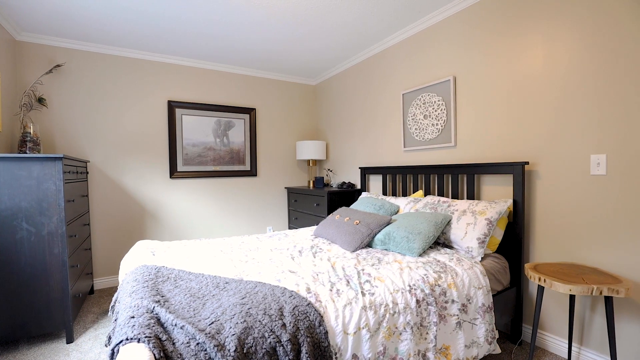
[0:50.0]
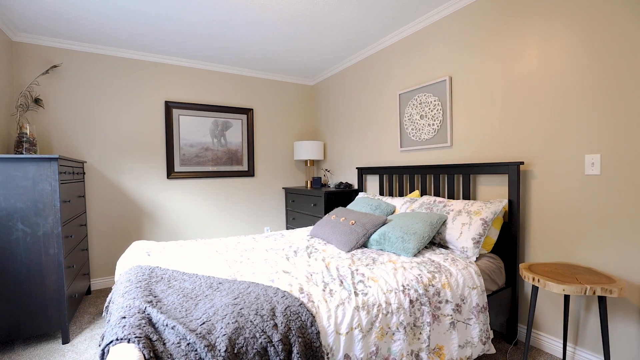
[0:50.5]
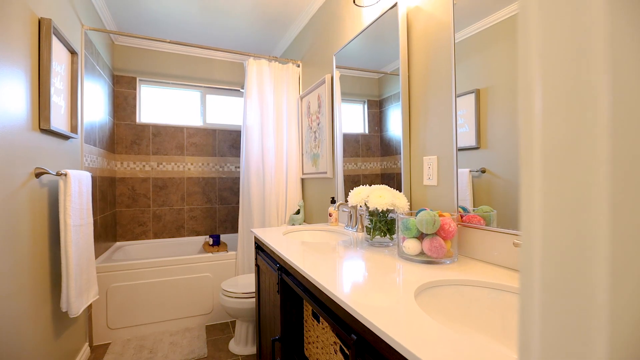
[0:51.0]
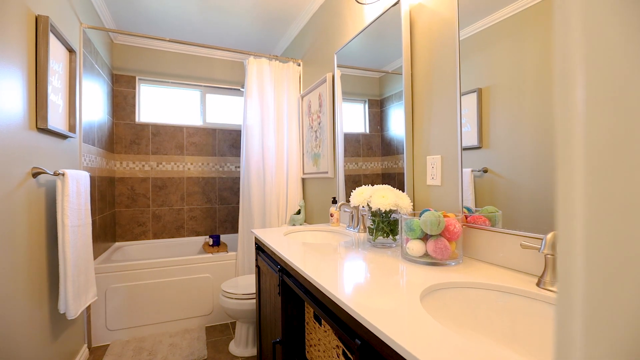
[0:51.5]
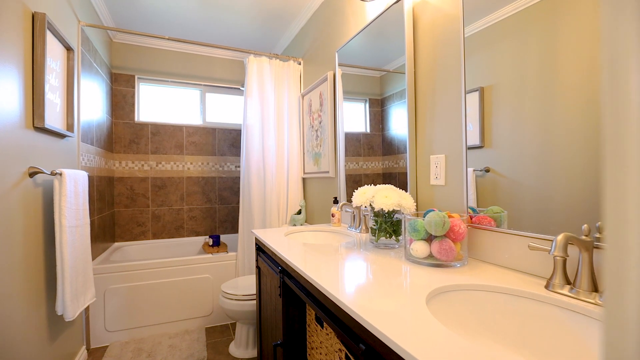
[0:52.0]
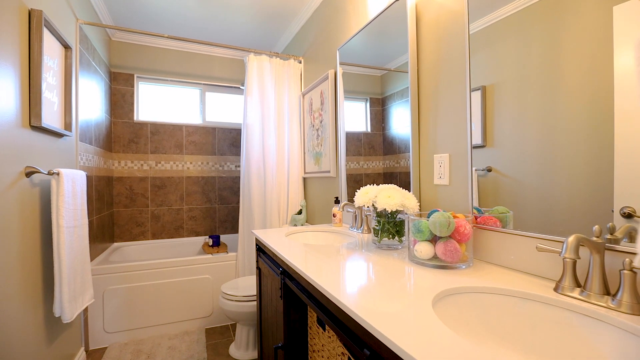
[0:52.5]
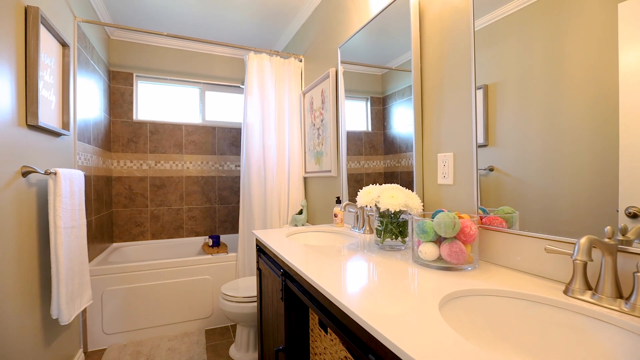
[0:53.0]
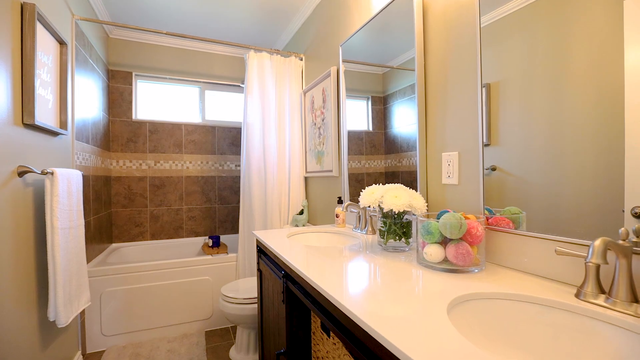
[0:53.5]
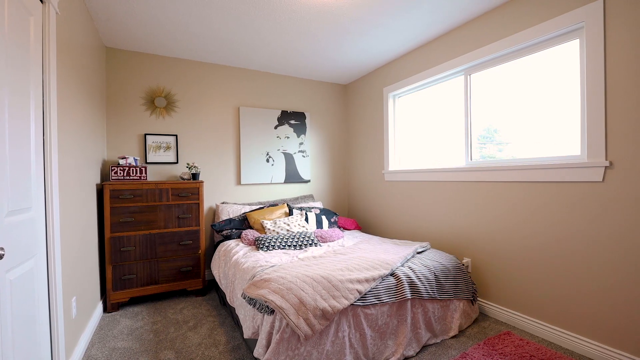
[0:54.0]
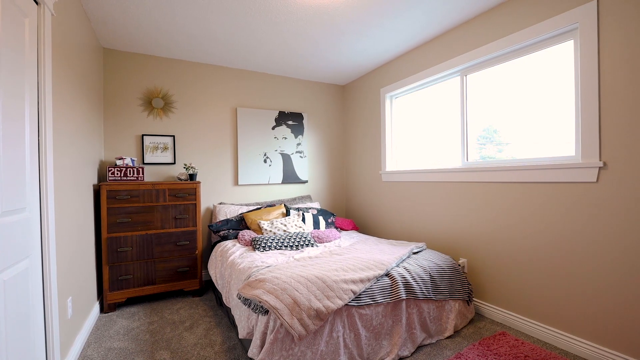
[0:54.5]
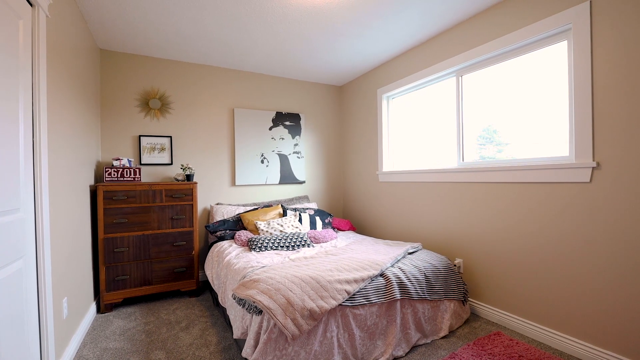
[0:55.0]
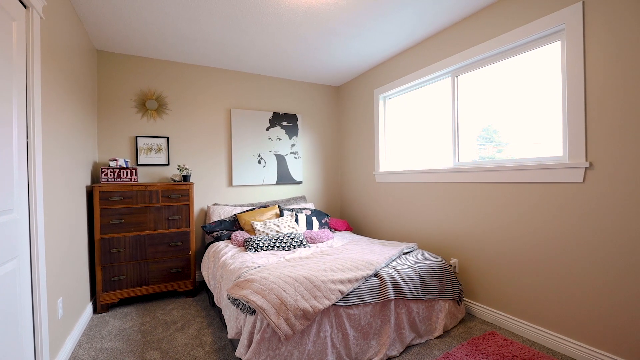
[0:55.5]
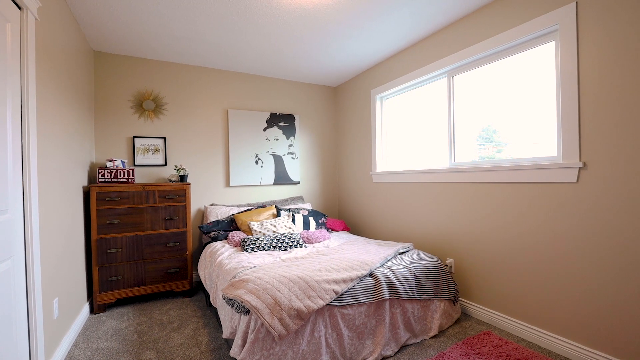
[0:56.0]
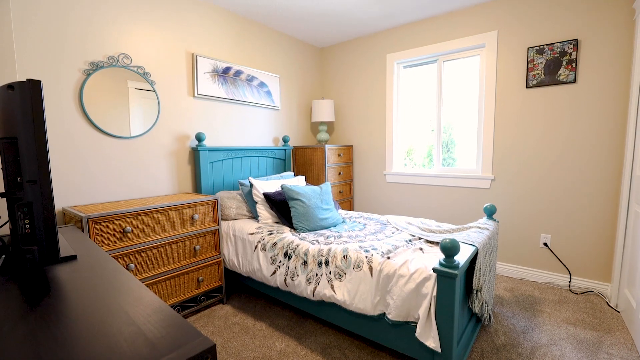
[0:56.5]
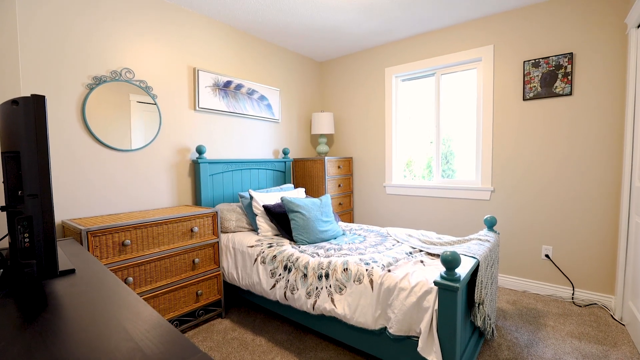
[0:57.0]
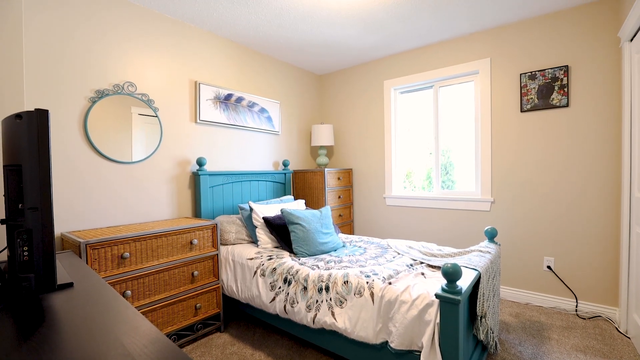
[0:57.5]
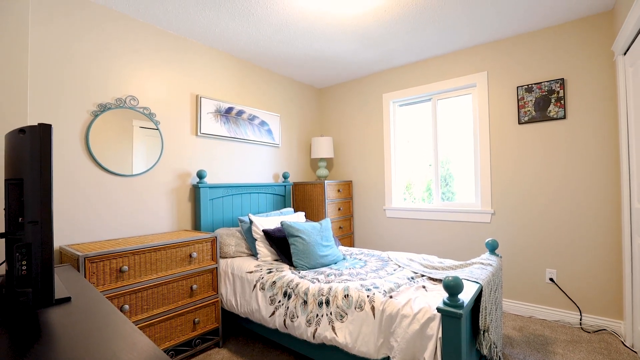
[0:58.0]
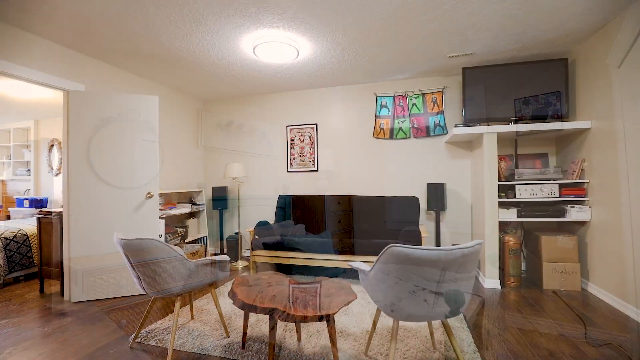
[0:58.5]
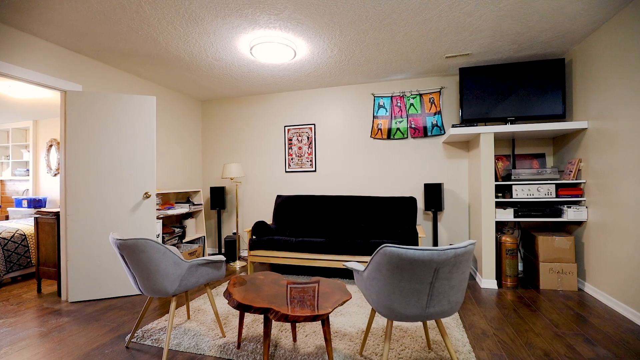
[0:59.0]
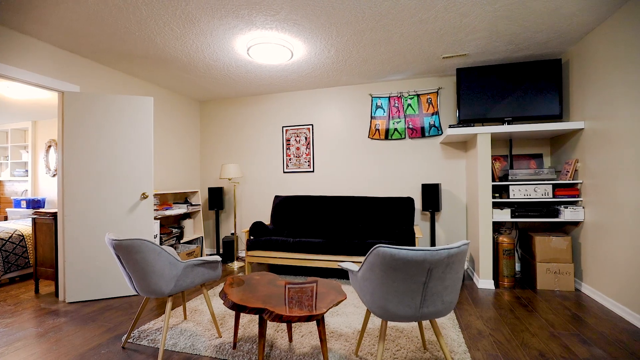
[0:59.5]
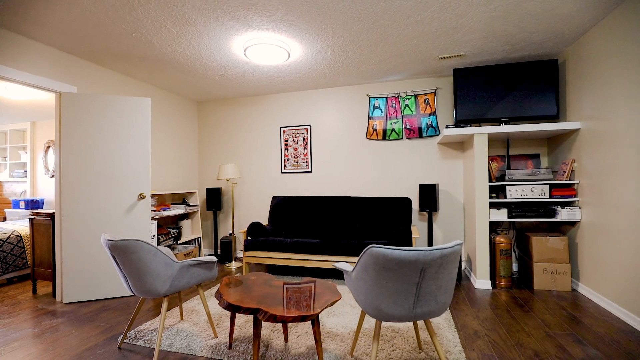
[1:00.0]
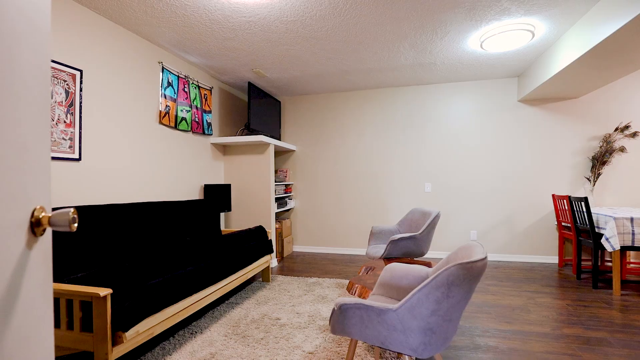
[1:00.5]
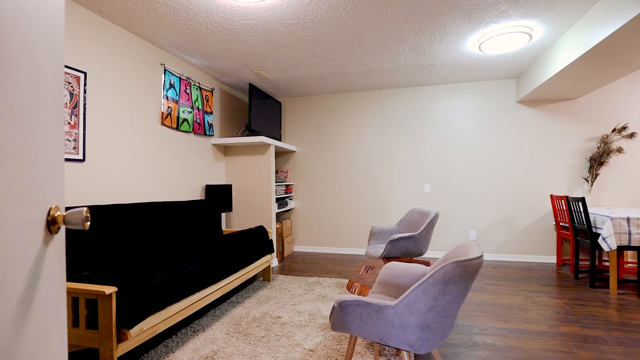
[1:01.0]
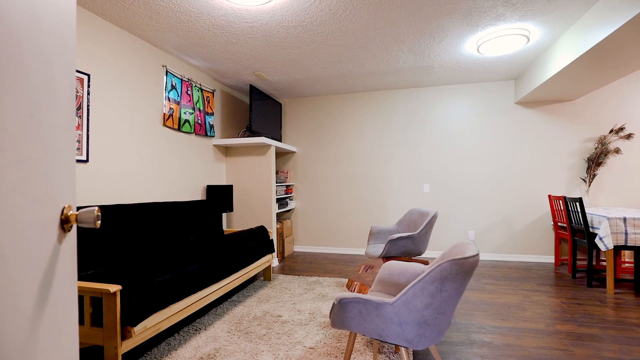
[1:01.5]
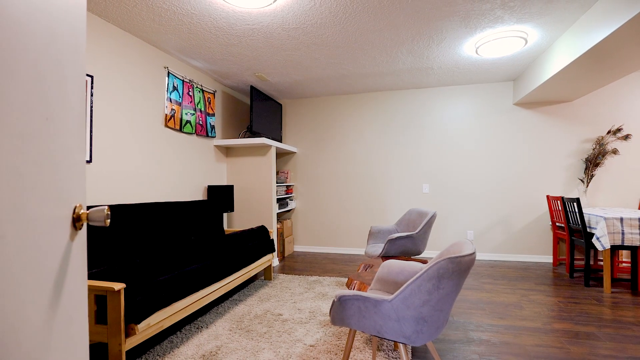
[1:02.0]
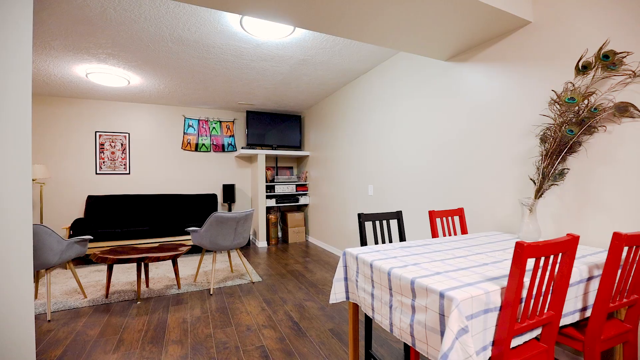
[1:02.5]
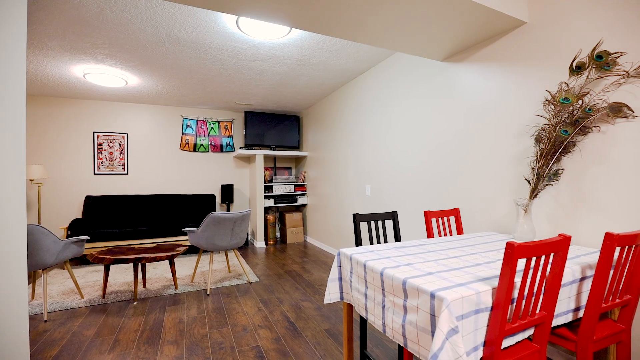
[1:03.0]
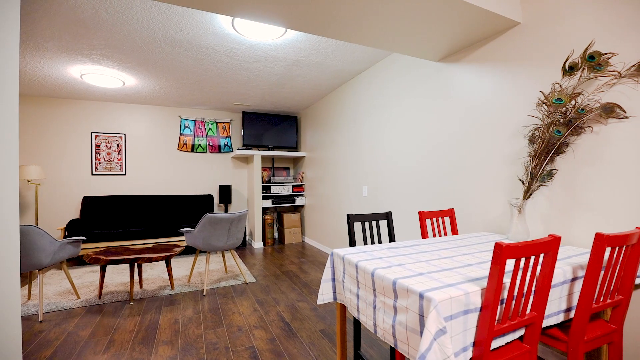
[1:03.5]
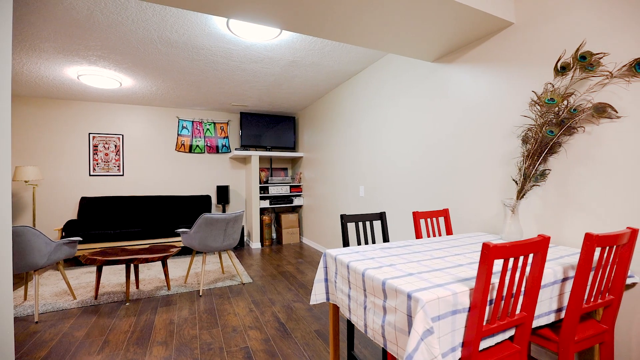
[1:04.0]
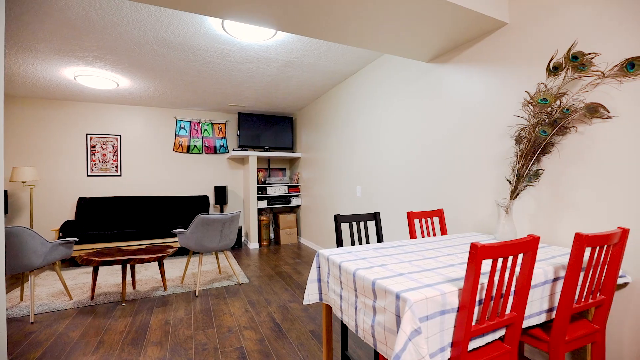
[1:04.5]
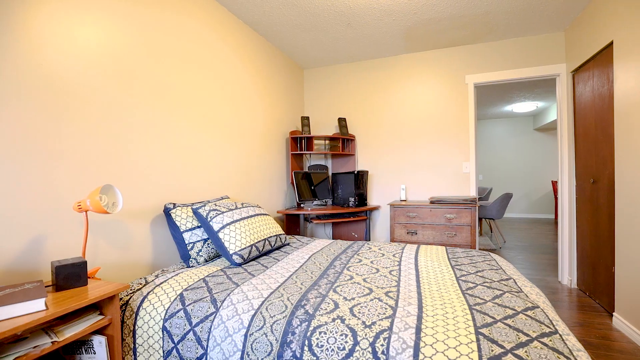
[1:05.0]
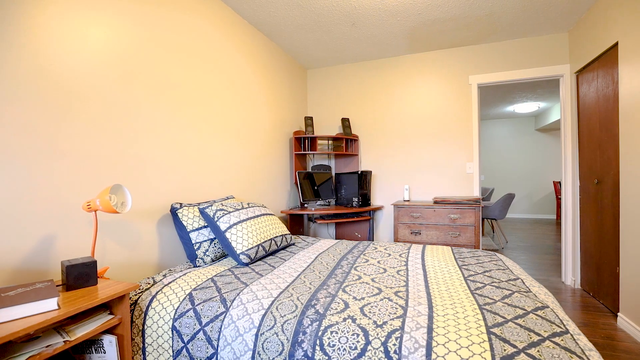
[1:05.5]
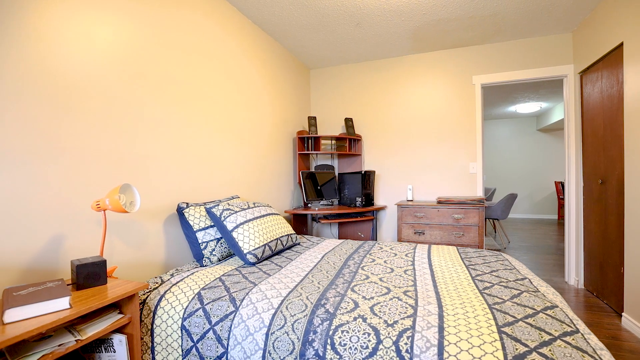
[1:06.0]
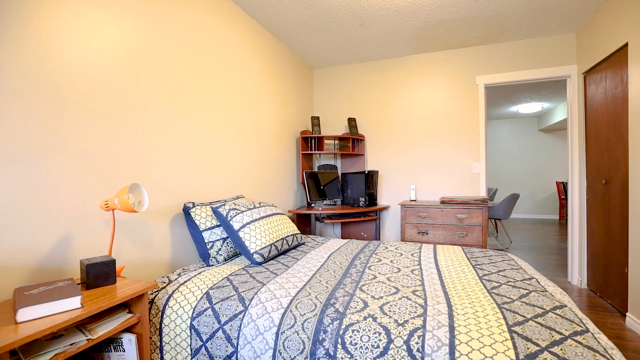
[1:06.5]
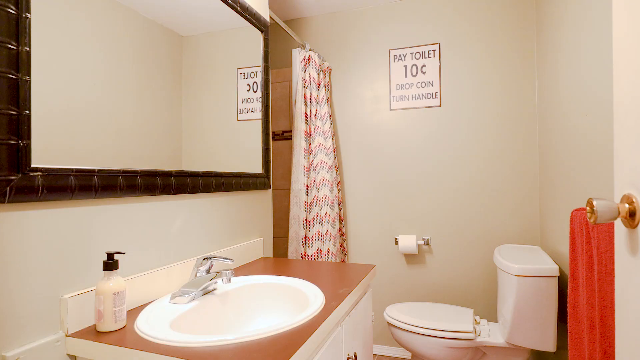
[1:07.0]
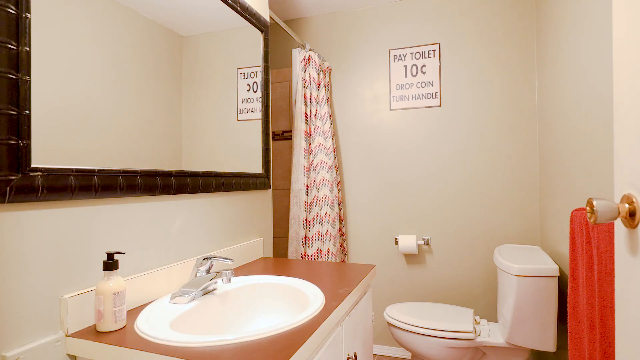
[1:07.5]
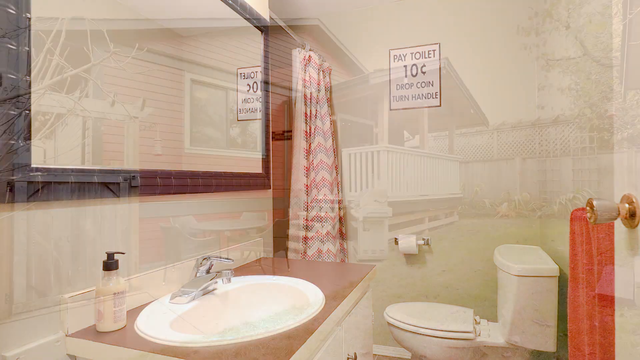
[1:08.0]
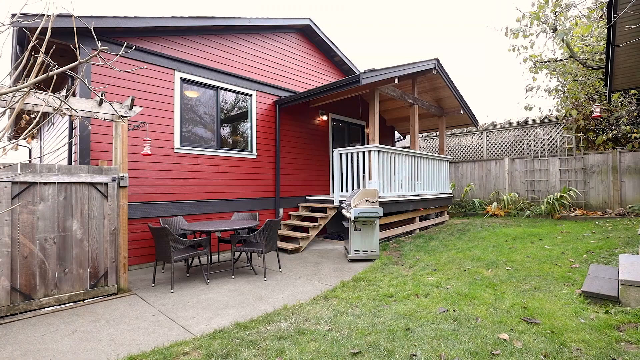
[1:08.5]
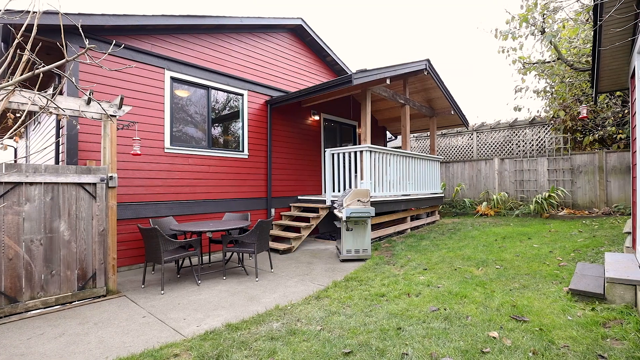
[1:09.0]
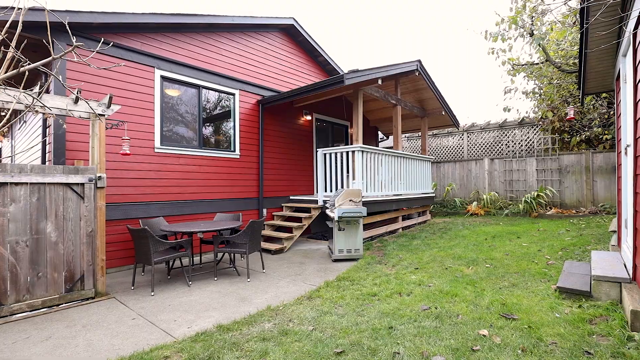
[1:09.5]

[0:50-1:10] The camera pans through bedrooms and another living area that could maybe be on another floor of the home, quickly showing different areas. First is a bathroom in light tones, with white flowers and a vase on the counter, little multicolored soaps in a clear glass jar, and tile around the shower area with a white shower curtain. Next is a small bedroom with a single bed, a window to the right, a black and white lithograph of Audrey Hepburn above the bed, kind of a pinkish bedspread with a little gray, multicolored pillows, and a wood bookshelf to the left of the bed. Another bedroom has a teal wooden headboard and a single bed with a teal throw pillow and white and black throw pillows, with a mostly white bedspread; this room also has a circular mirror on the wall, a wood dresser, and a window. Finally, what looks to be another living area has a black futon, some gray chairs, assorted wall hangings, and a TV in the upper corner; this area is a little more crowded.